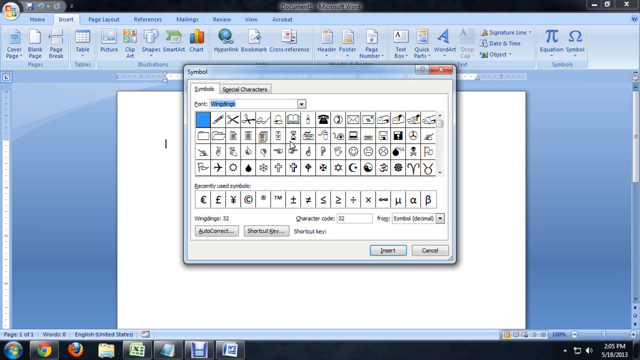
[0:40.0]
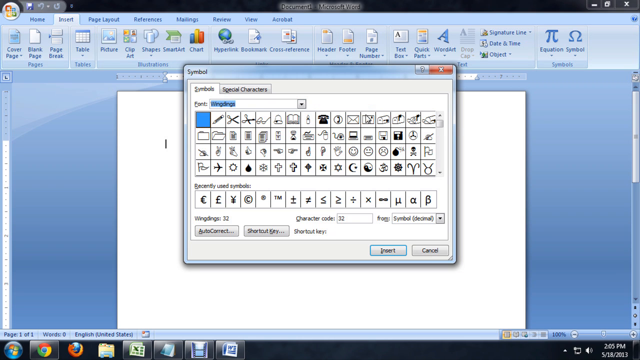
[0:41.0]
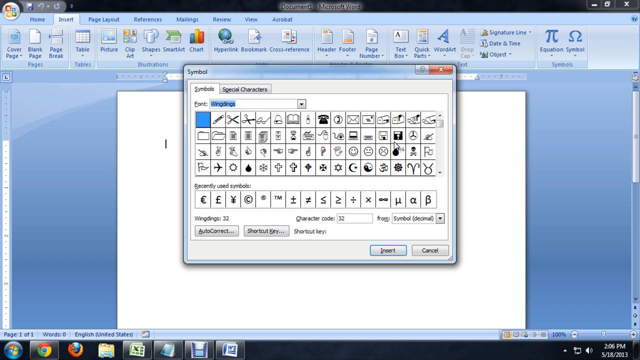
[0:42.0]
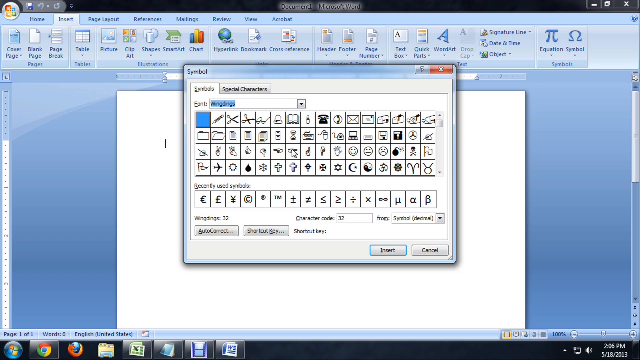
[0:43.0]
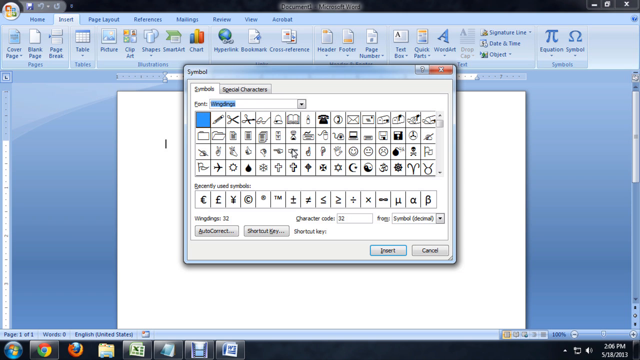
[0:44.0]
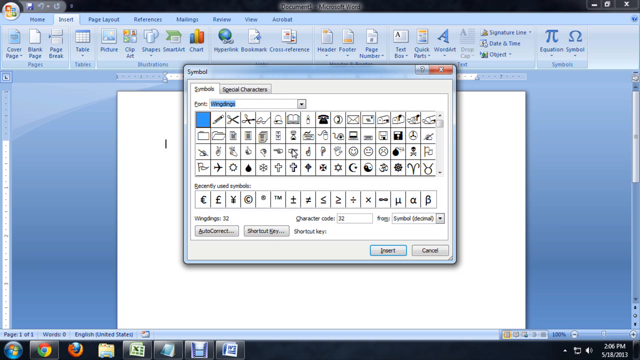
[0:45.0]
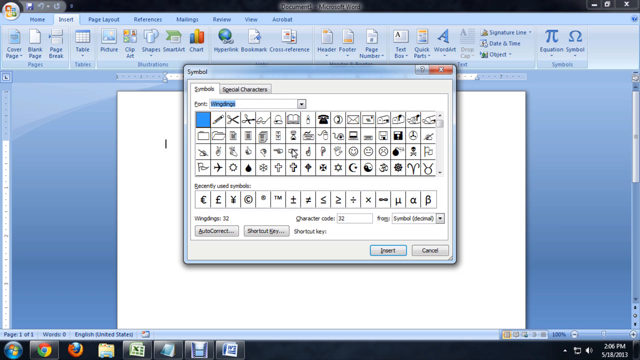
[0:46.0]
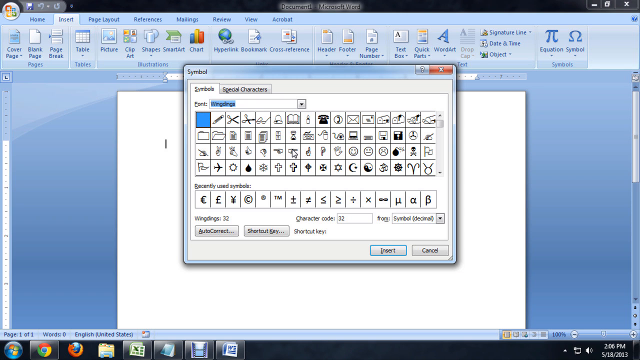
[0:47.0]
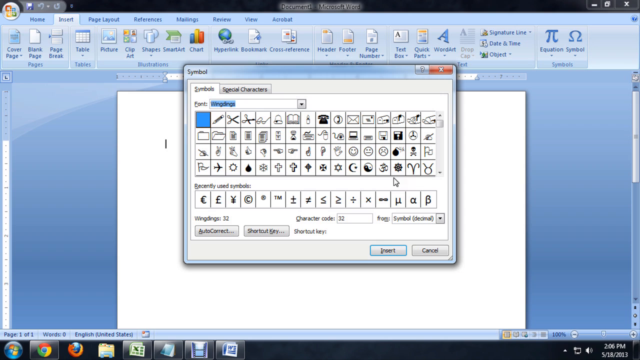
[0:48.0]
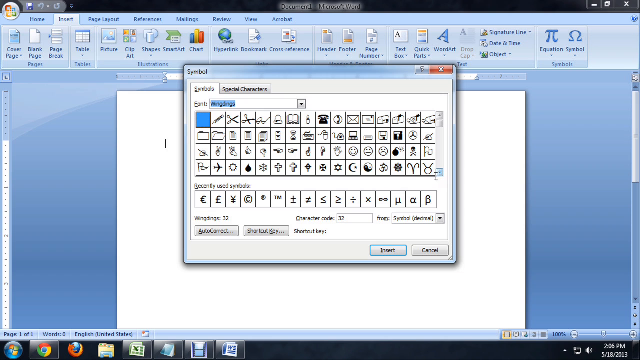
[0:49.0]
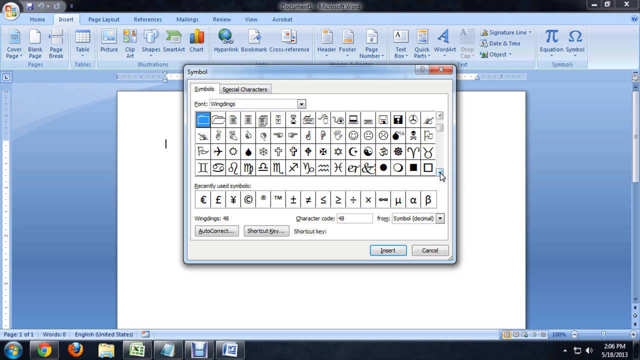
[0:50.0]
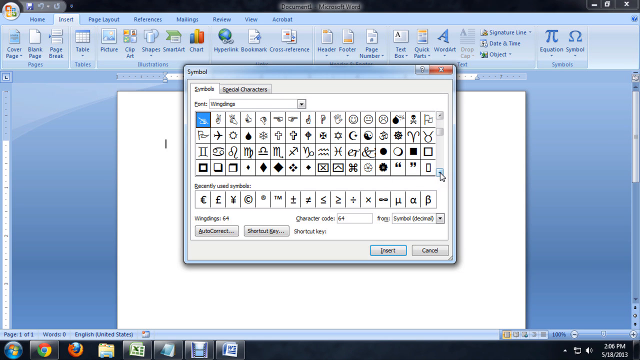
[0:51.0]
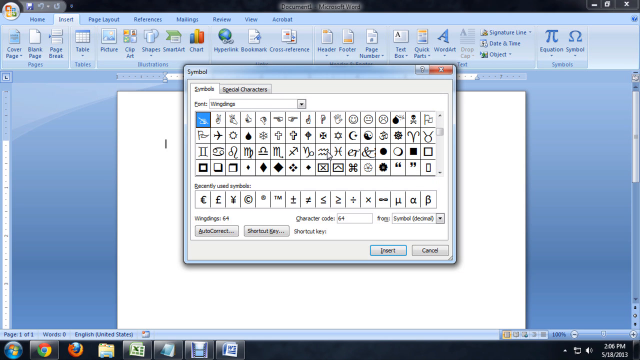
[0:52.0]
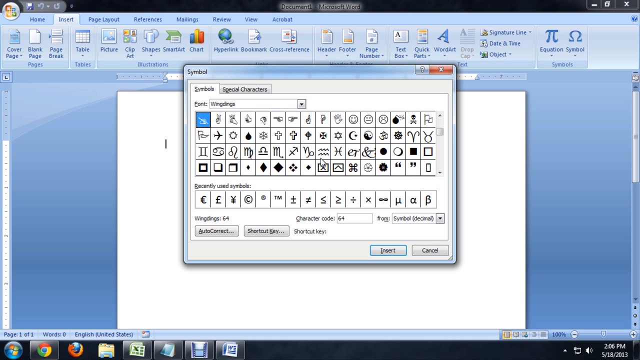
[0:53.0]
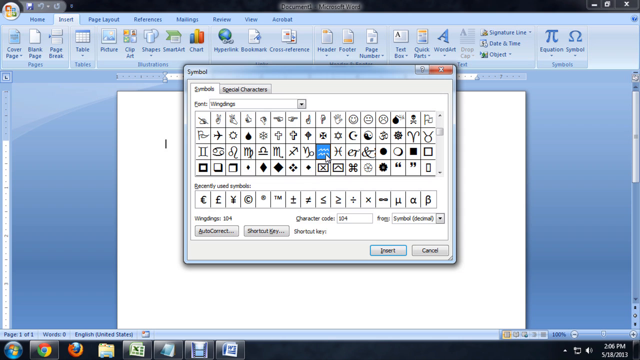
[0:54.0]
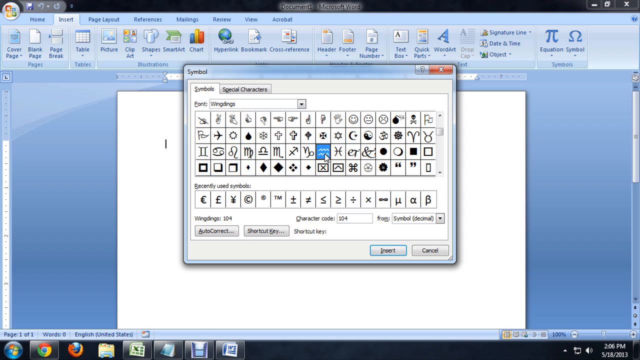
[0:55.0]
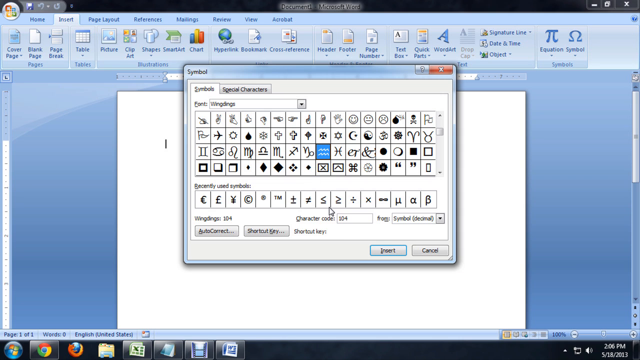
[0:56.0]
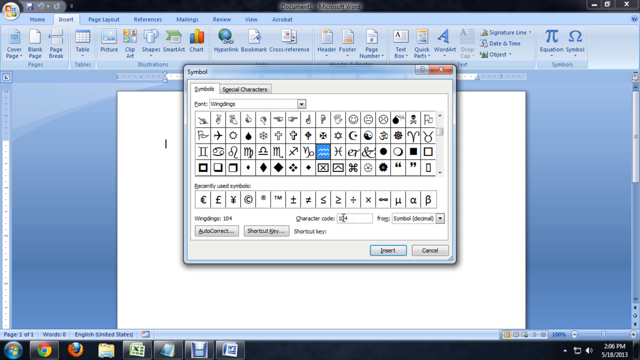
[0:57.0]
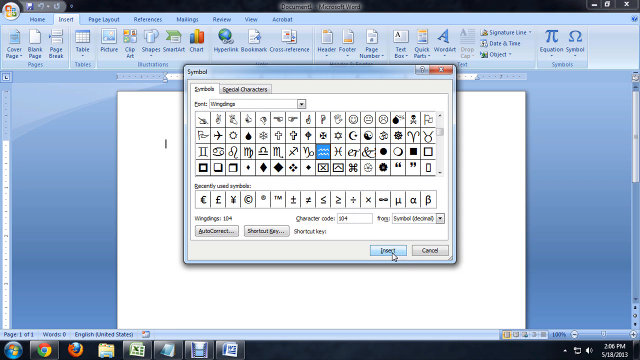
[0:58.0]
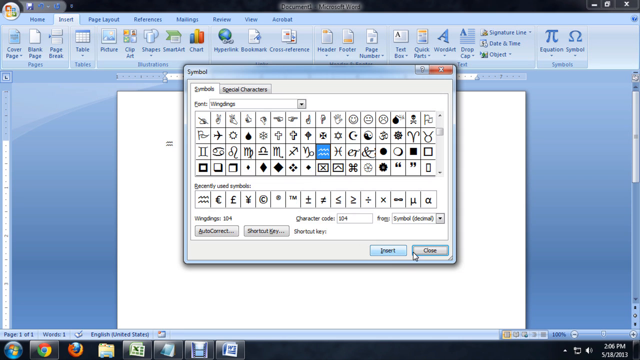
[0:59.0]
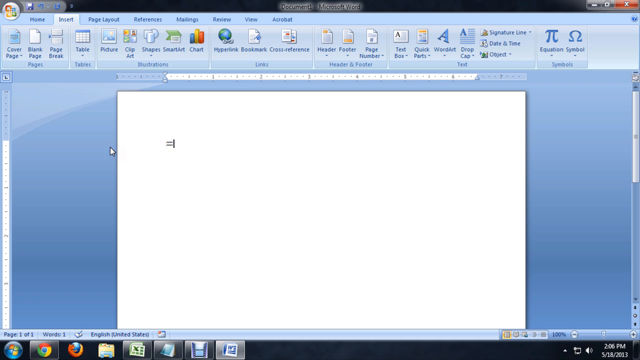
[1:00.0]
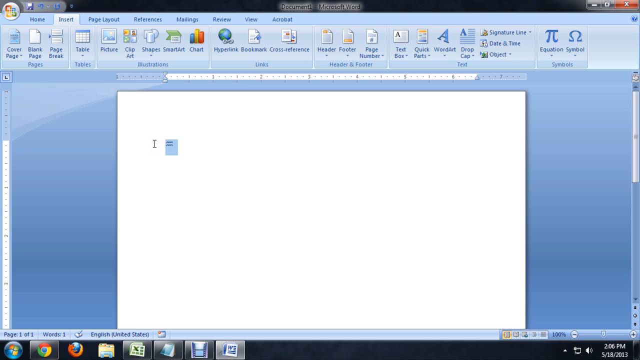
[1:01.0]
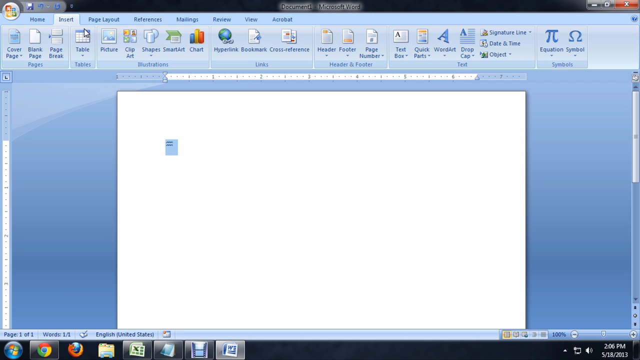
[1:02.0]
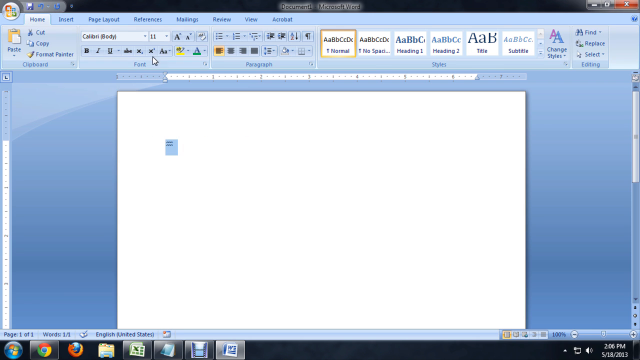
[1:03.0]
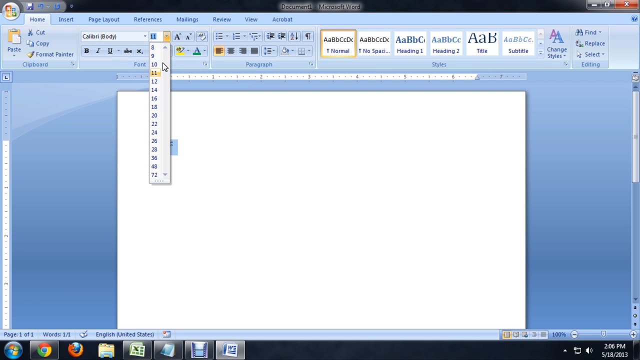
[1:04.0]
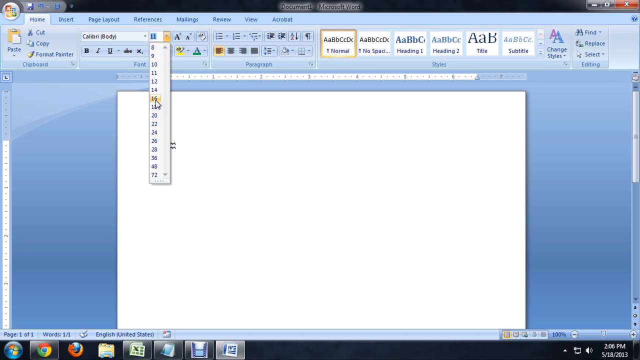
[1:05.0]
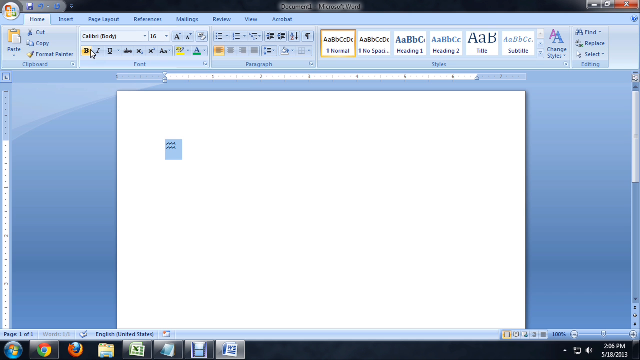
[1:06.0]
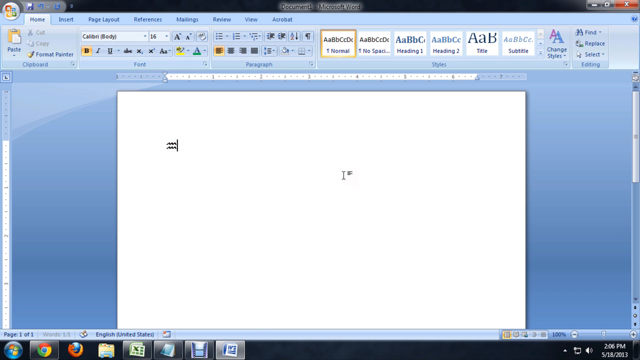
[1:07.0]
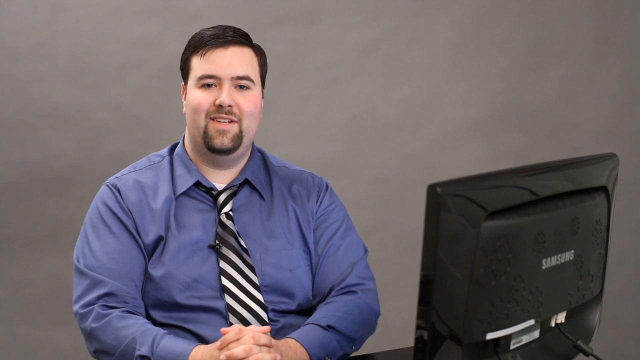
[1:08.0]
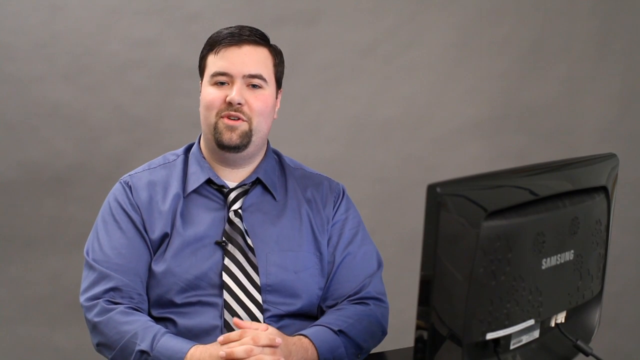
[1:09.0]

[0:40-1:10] He moves his mouse all over the symbols menu options and clicks on one that looks sort of like a river. He then goes down to the bottom of the tab and clicks the insert button, then quickly moves over to close. The main document pops back up, showing the selected symbol on the screen. He moves his mouse up to the font size button, the drop-down pops out, and he selects what appears to be 16. Finally he moves his cursor up and to the left, clicks the bold icon, and closes that window. The video then quickly transitions back to Josiah sitting in front of the camera.